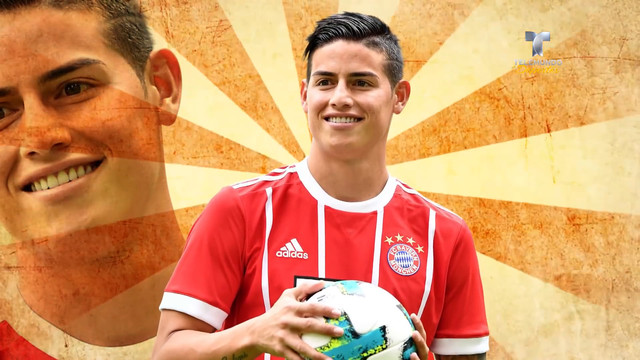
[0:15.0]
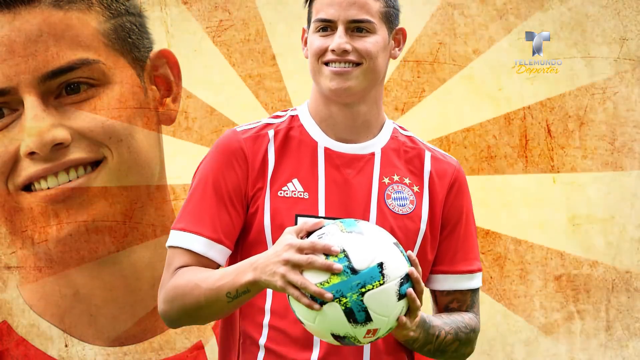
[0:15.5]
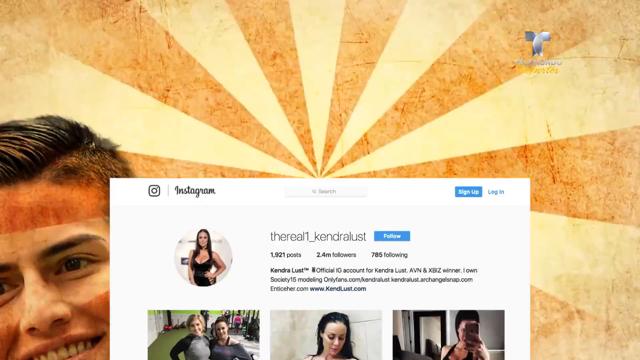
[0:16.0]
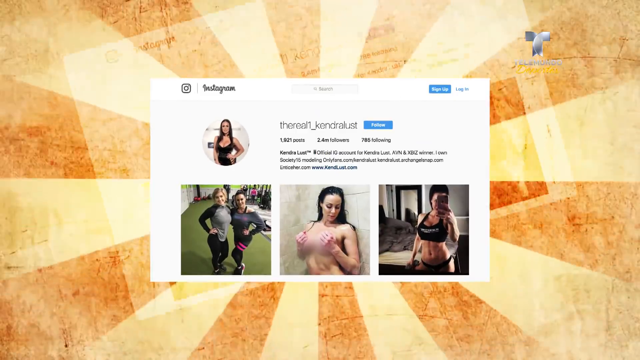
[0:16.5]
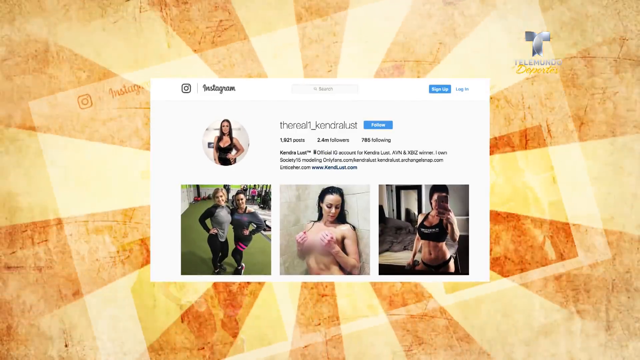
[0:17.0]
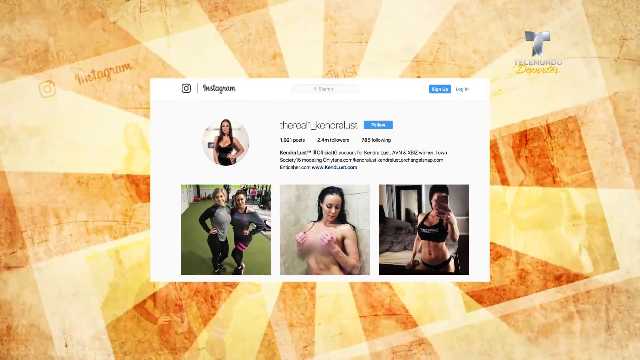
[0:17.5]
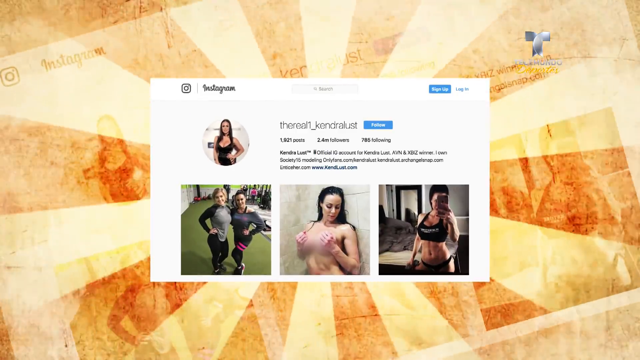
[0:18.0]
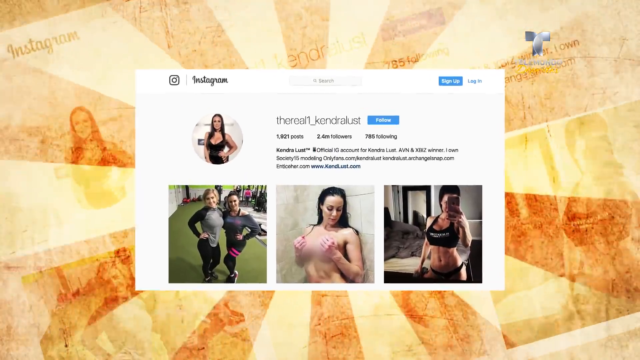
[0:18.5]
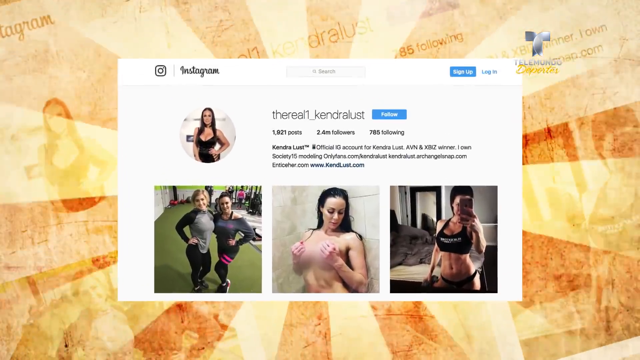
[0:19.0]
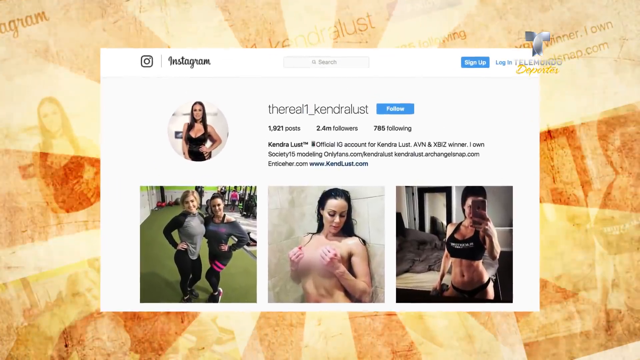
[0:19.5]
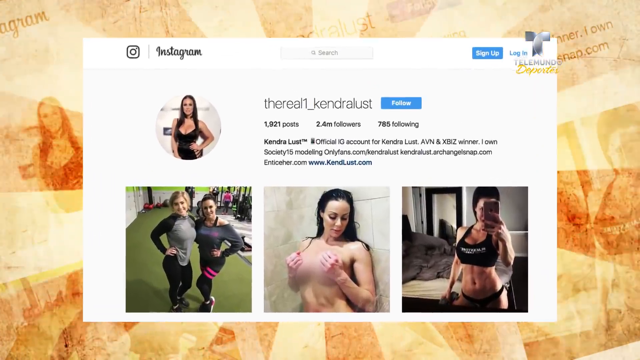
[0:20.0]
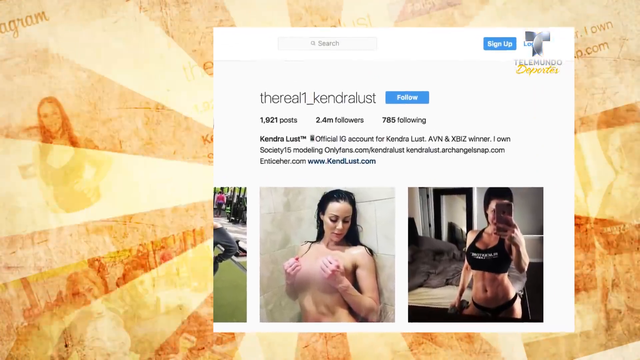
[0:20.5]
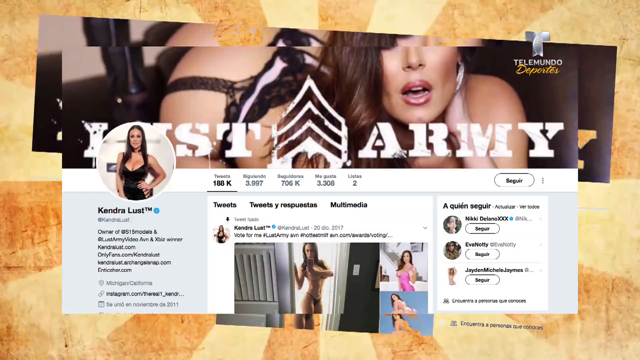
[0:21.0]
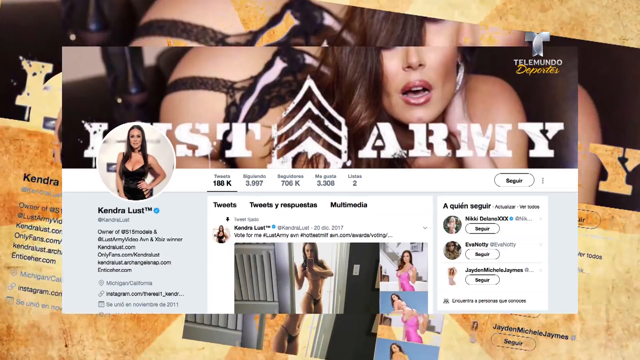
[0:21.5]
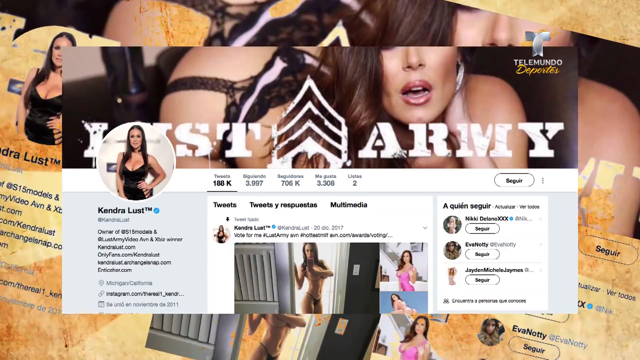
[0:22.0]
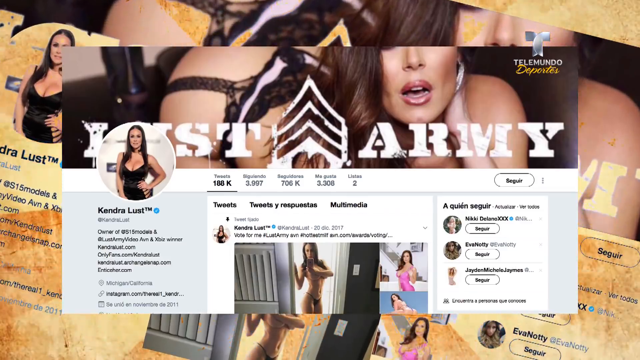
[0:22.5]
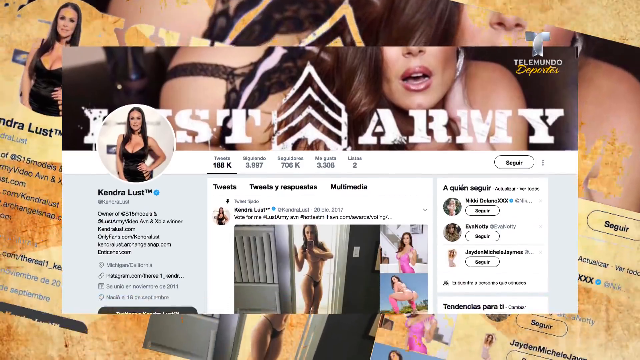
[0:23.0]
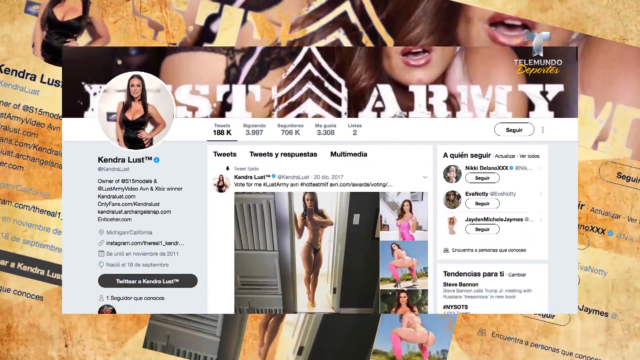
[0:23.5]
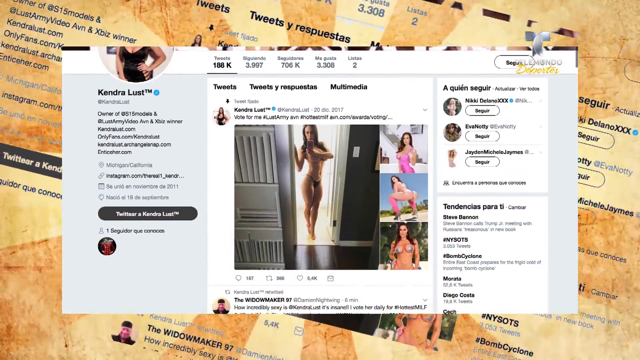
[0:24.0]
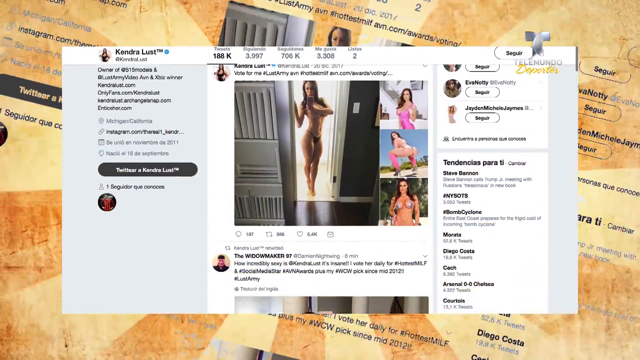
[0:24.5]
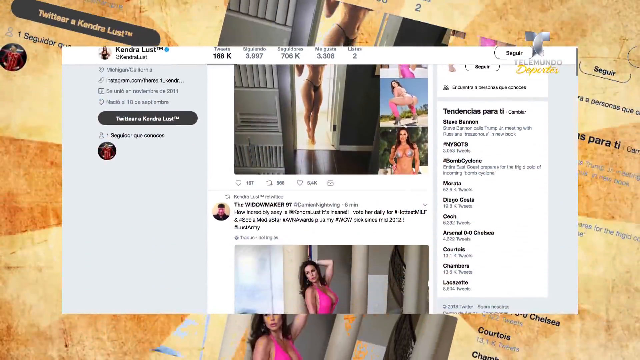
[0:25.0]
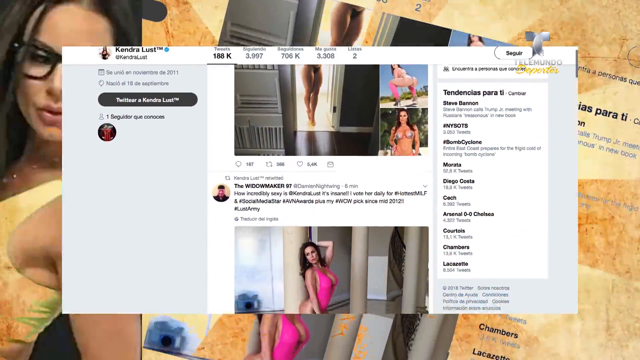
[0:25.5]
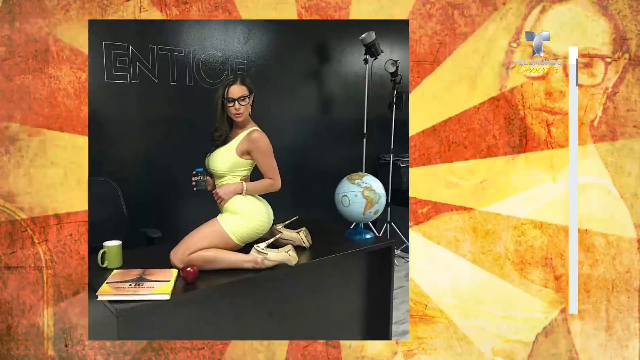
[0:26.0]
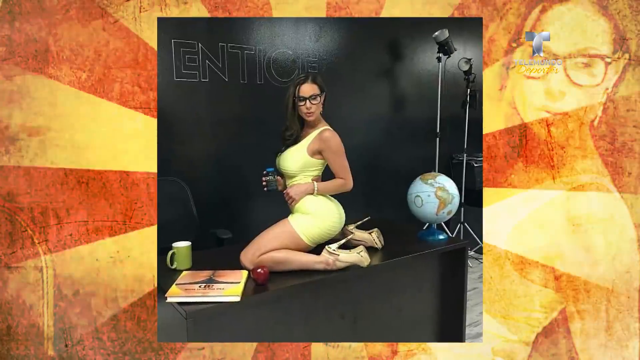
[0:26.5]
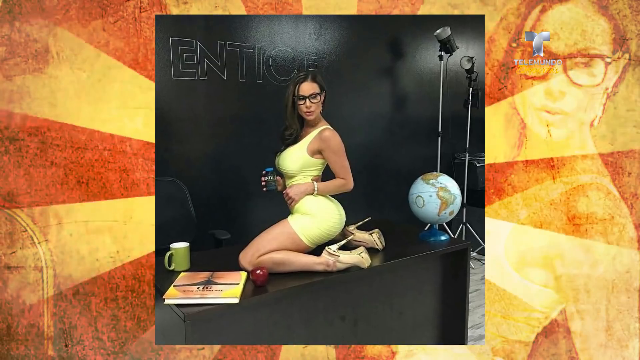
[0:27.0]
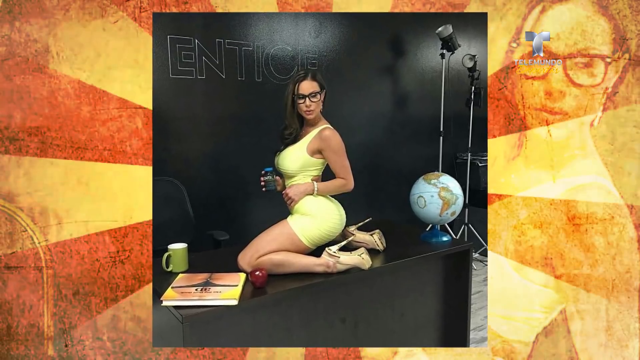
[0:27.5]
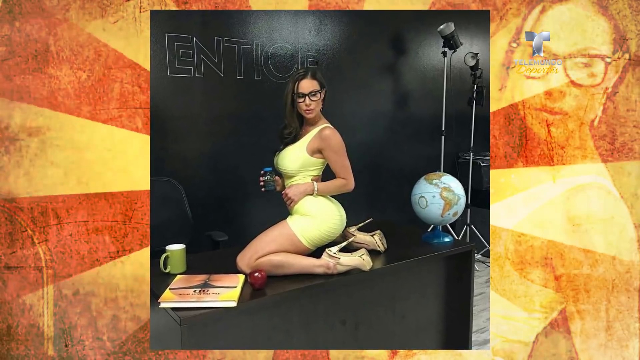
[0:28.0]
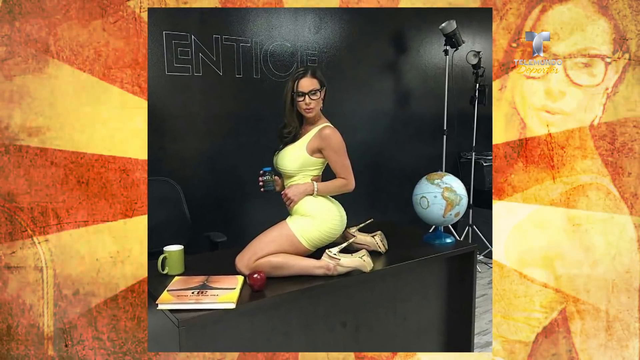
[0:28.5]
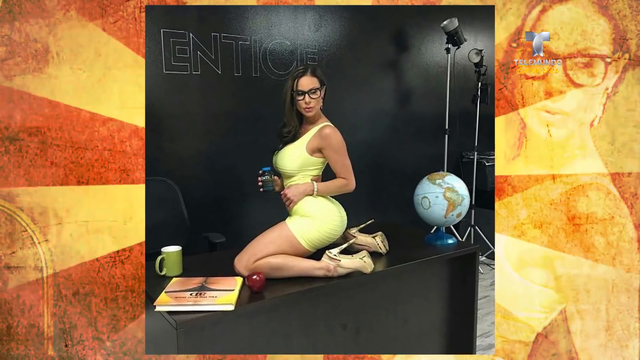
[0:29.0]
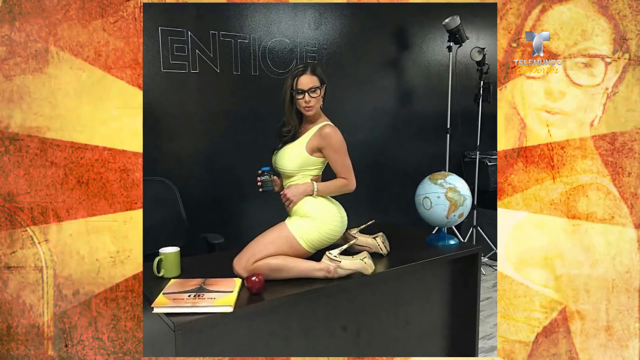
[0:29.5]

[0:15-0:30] The soccer player holds a soccer ball in his uniform for a moment. The video then shows the Instagram profile of the woman, named "the real one_Kendra Lust", with pictures of her, three of them very raunchy. The profile shows "1,921 posts", "2.4 million followers" and apparently "785 following". The profile text reads "official ID account for Kendra Lust" and lists several websites. Next, her Twitter profile appears with similar information, and it is scrolled through. Another very raunchy picture shows her kneeling down with heels on, wearing a very tight lime or yellow colored dress.